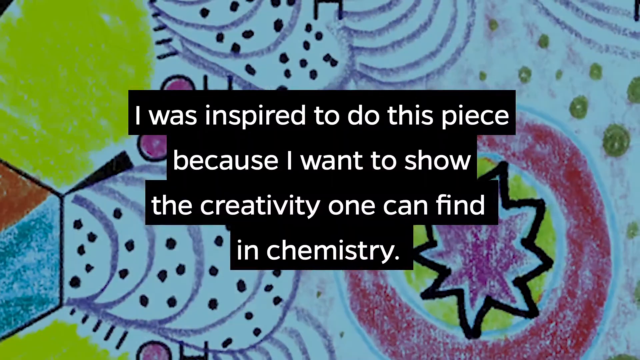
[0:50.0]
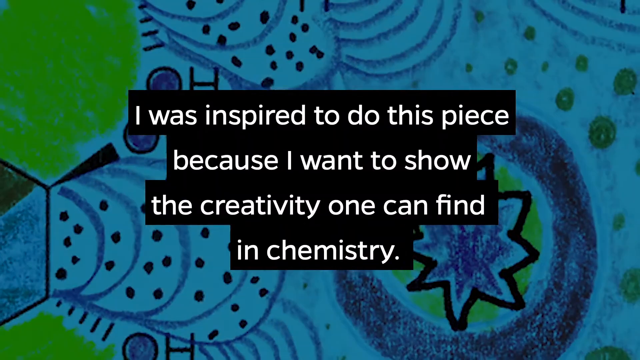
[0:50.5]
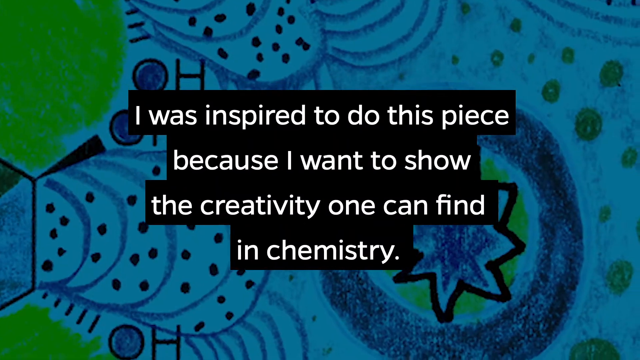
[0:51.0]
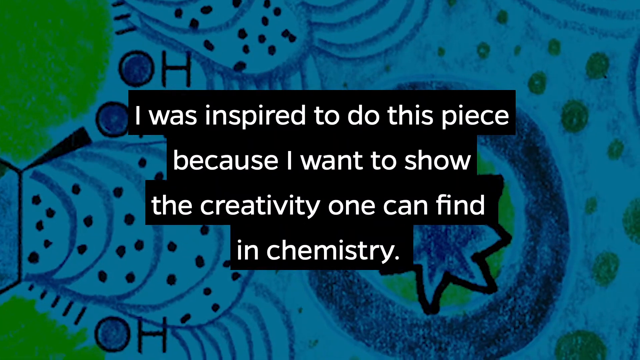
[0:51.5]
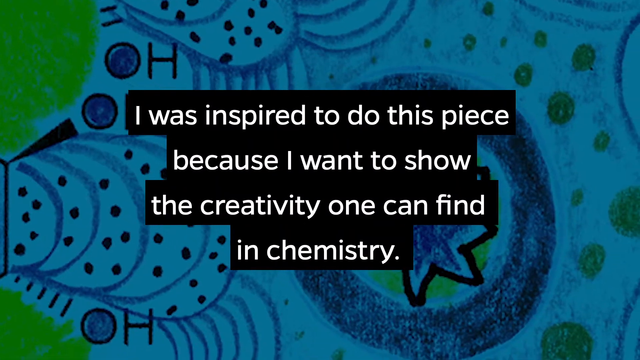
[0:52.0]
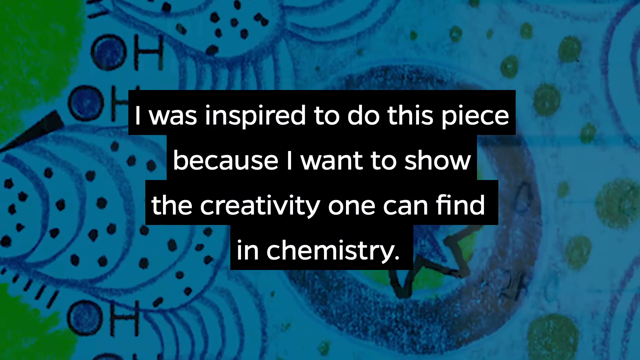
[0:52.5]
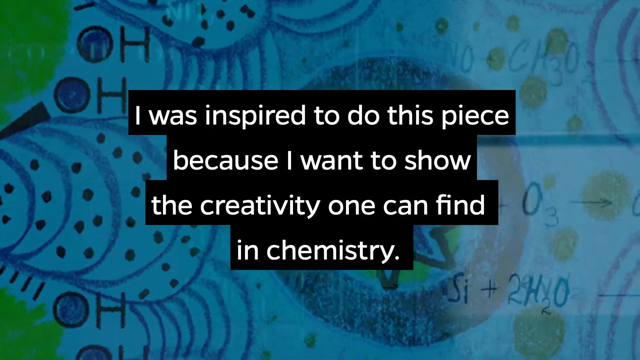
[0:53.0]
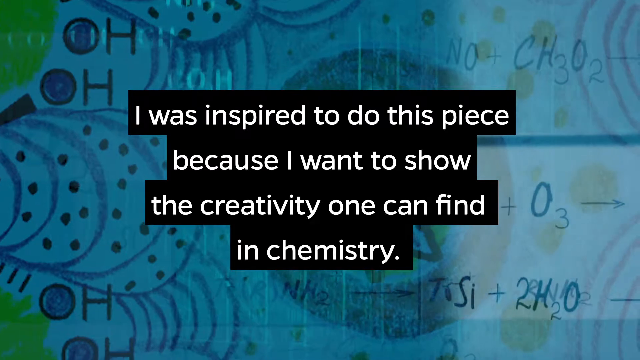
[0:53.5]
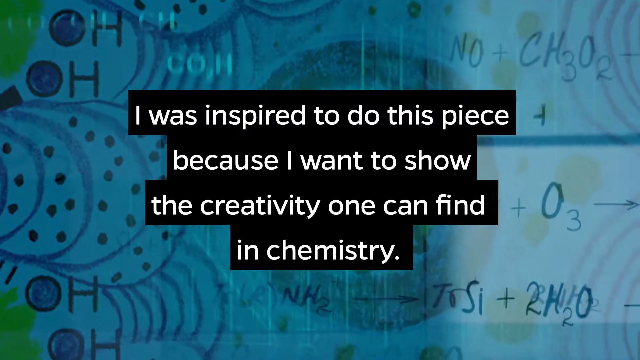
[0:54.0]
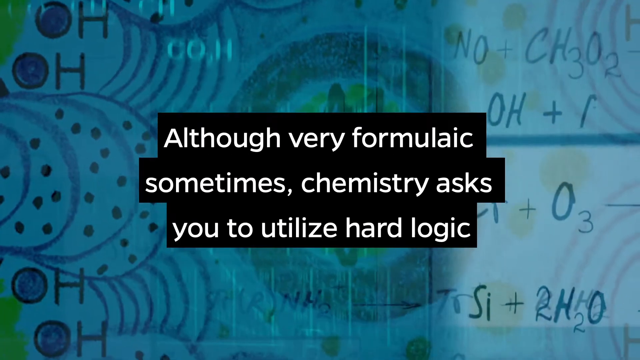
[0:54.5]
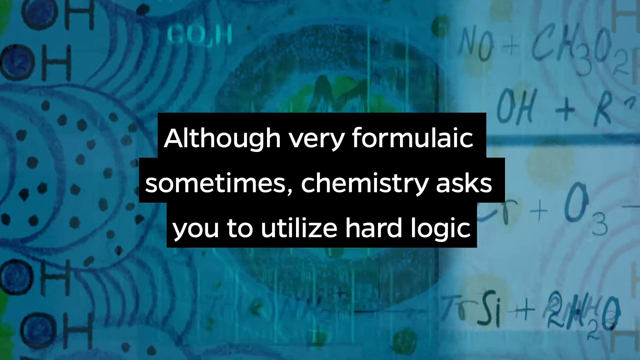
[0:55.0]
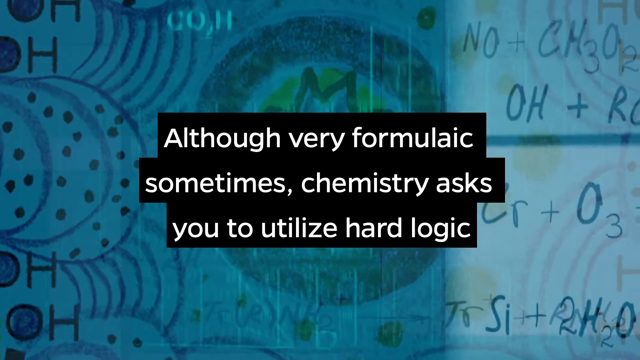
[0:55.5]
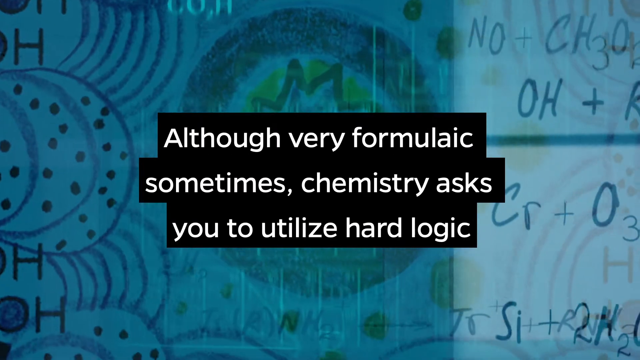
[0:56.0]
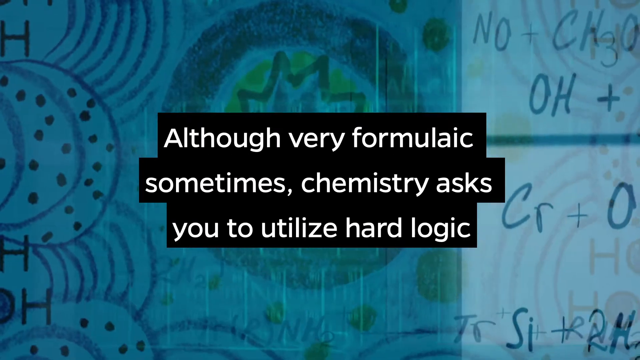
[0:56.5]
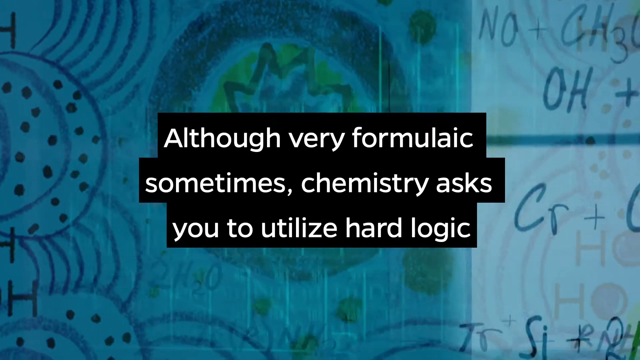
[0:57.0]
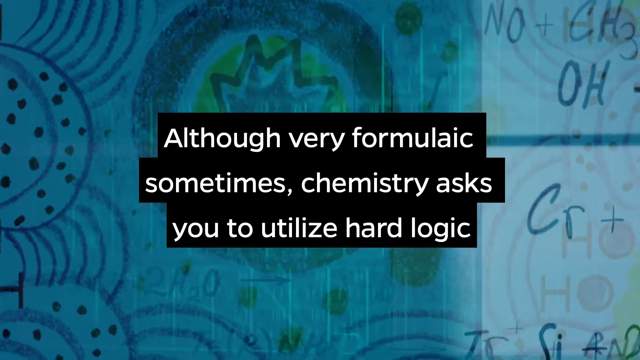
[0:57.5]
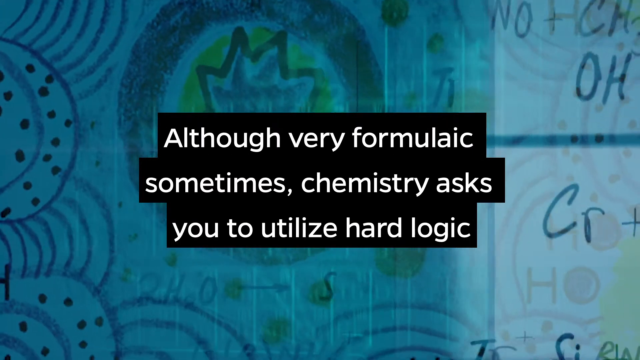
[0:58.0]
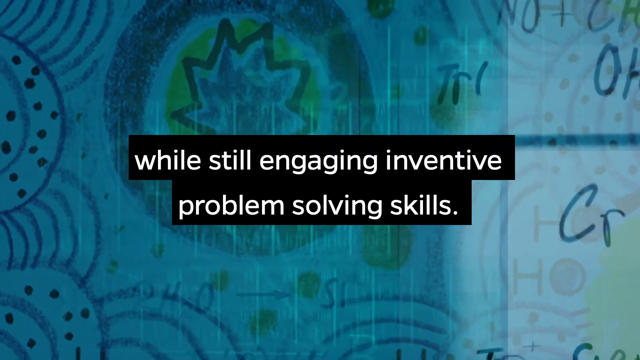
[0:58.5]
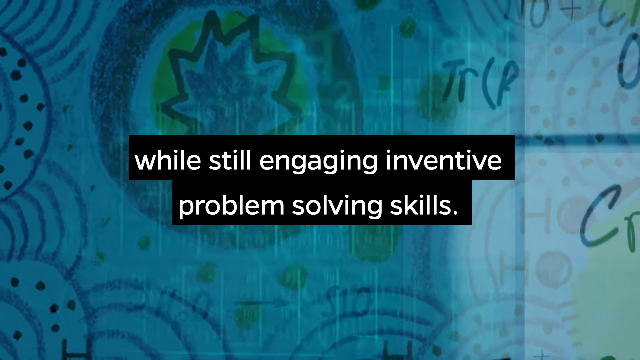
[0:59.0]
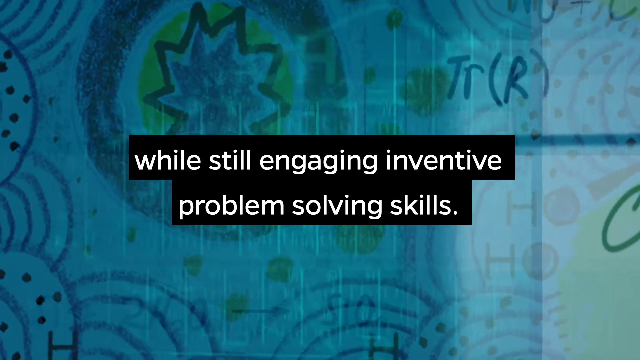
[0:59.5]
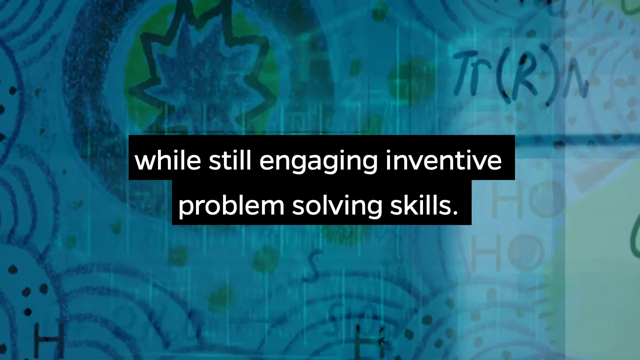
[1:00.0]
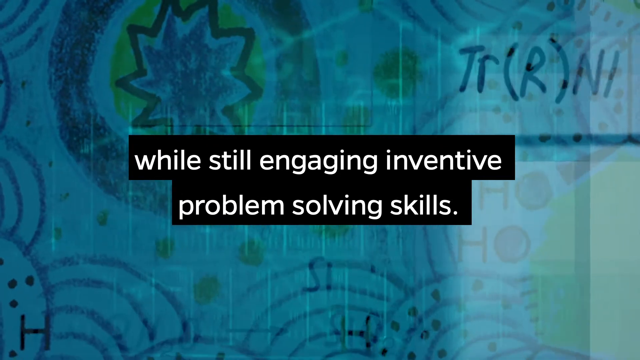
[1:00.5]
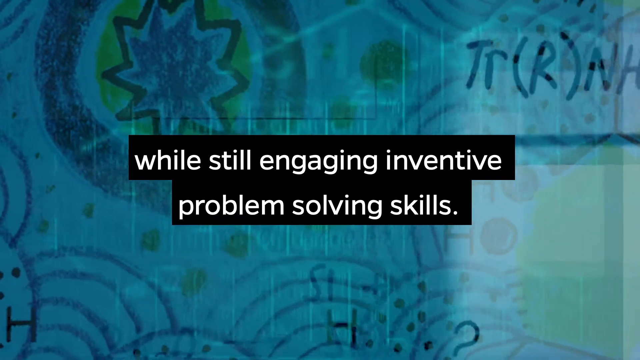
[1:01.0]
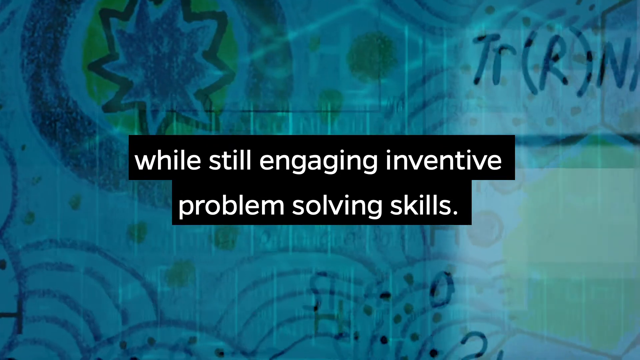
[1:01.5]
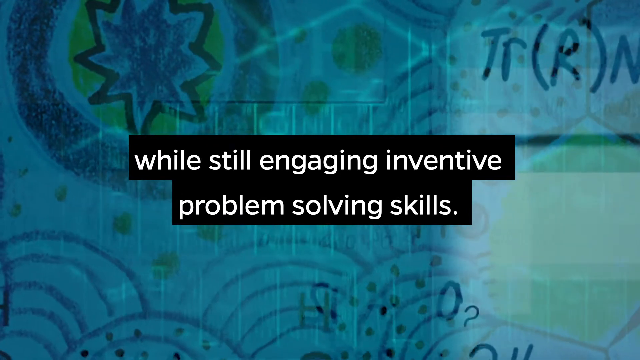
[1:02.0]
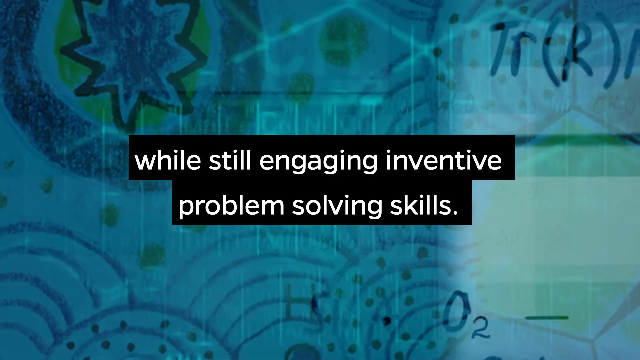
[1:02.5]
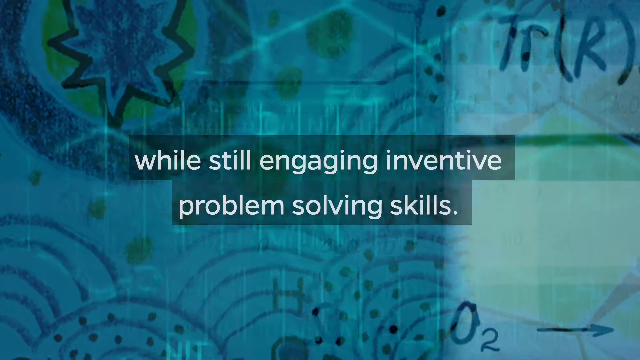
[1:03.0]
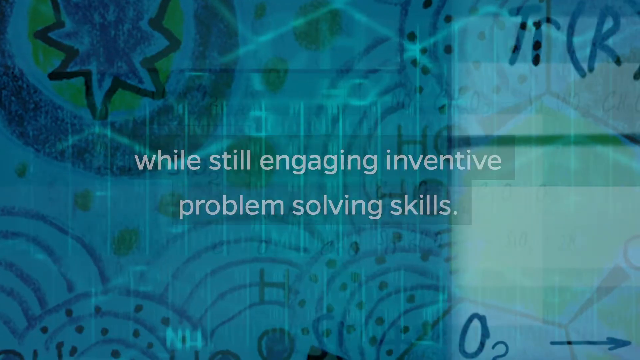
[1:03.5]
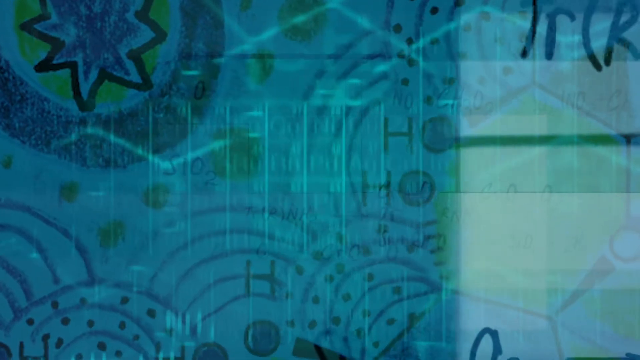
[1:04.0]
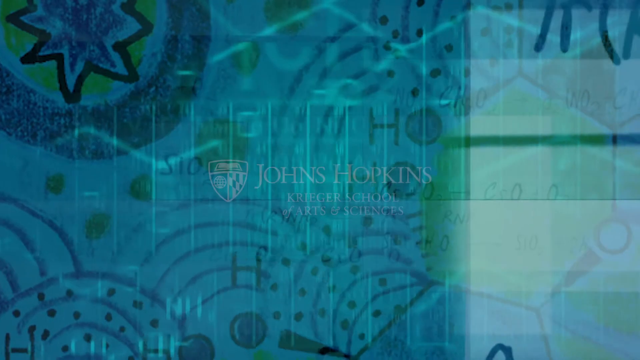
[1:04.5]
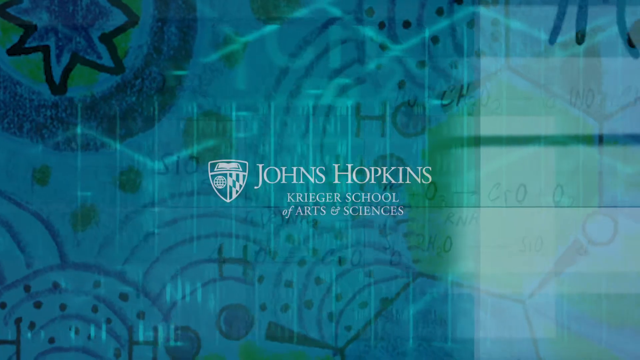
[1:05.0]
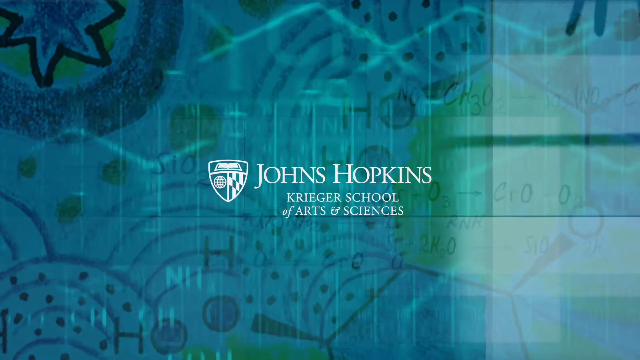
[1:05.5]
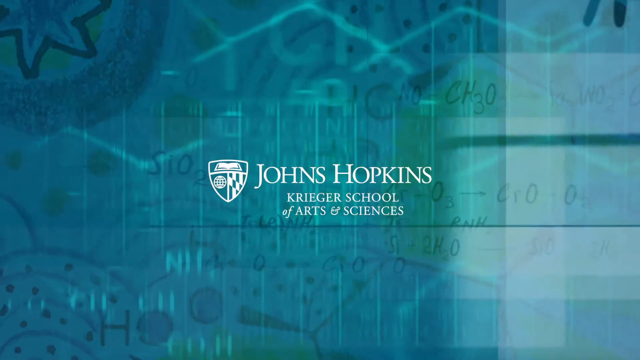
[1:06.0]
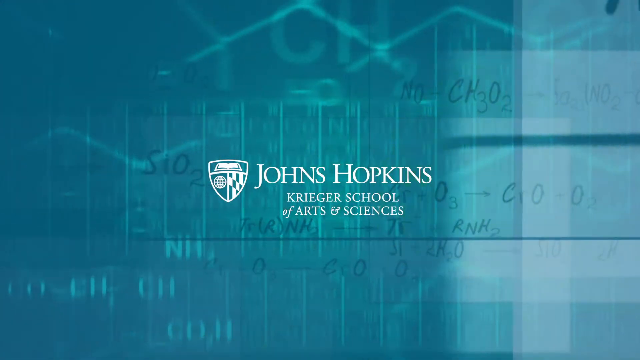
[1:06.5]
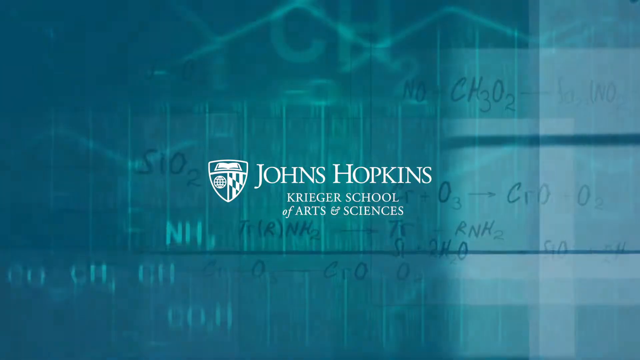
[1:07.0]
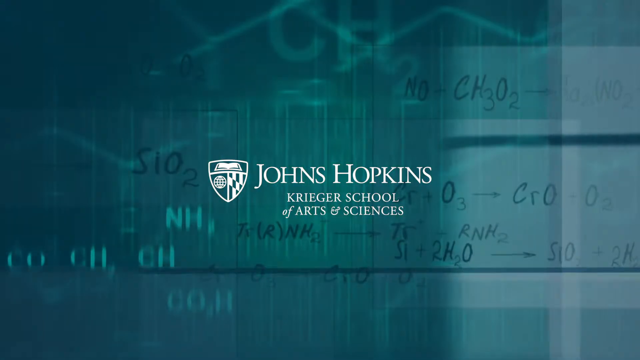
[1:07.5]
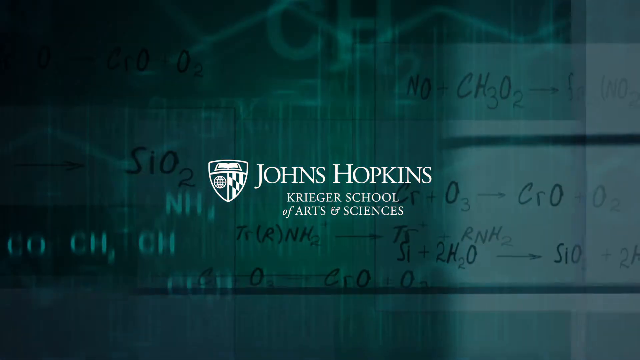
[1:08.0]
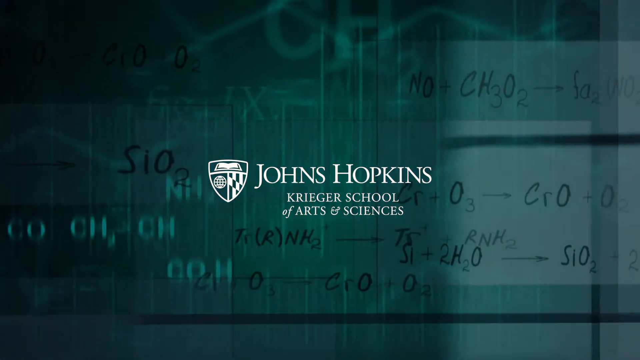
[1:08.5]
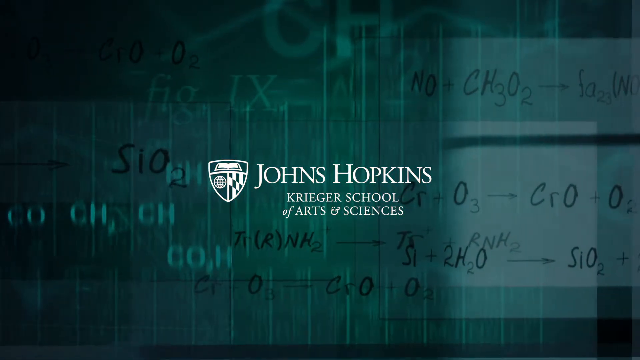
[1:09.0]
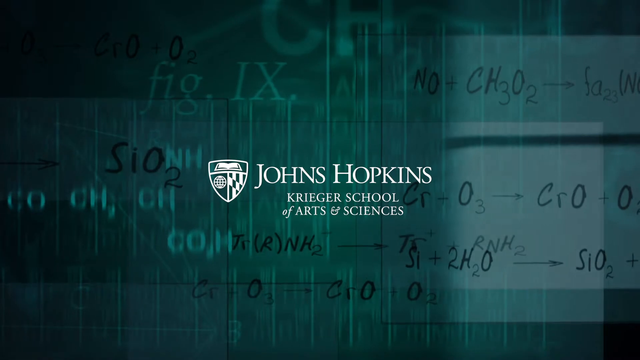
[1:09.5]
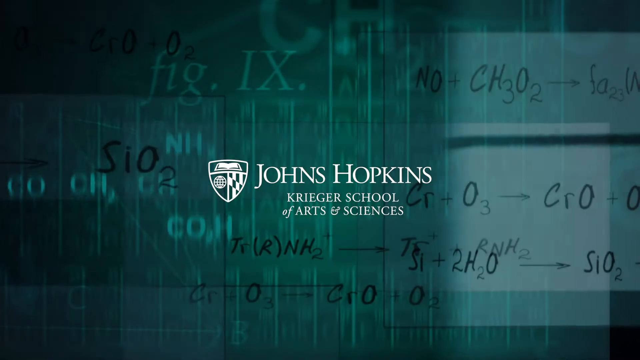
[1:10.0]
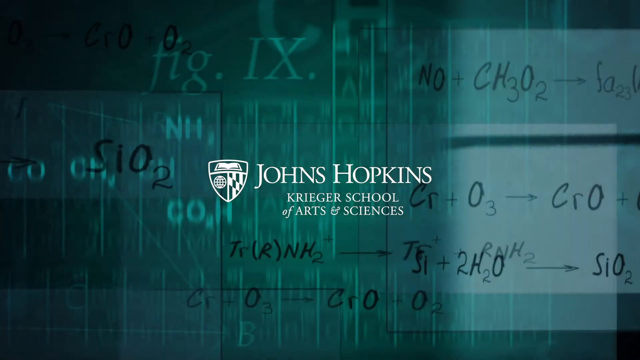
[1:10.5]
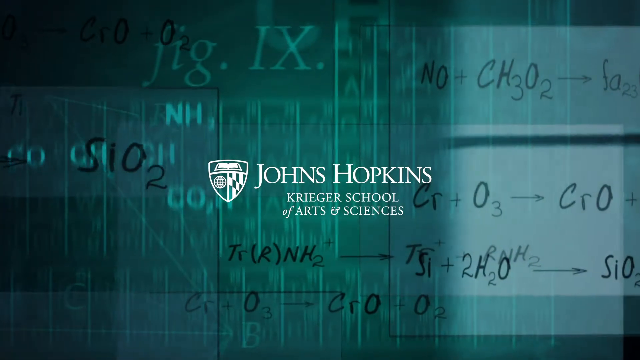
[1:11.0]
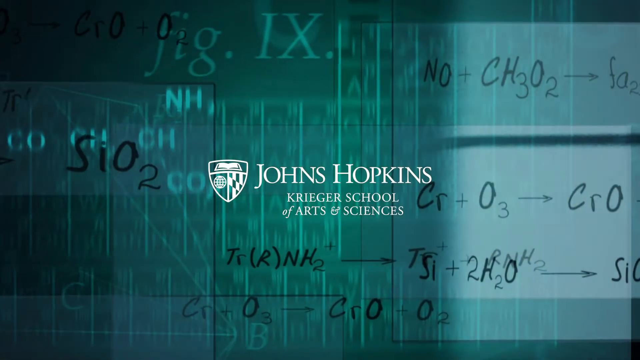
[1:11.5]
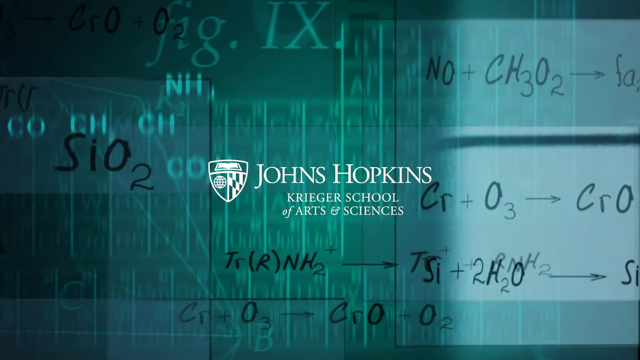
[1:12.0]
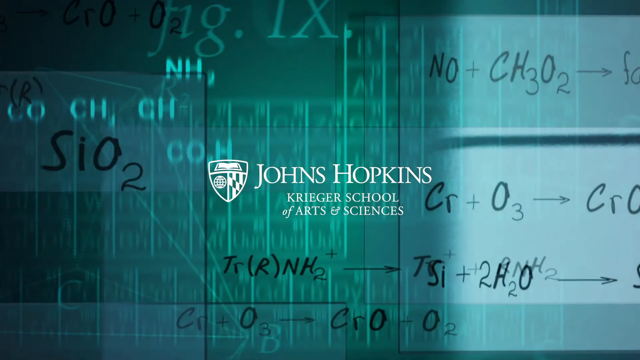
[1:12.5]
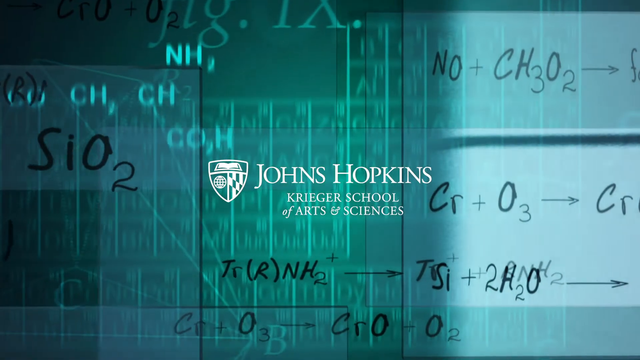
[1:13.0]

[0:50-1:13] The extreme close-up shot of a section of the drawing remains, now static. Large white text in black boxes in the middle of the screen says 'I was inspired to do this piece because I want to show the creativity one can find in chemistry'. The colourful illustration in the backdrop fades to a darker colour and is then replaced by a layered montage of chemical formulas moving in various directions, as the text in the black box in the centre changes to 'Although very formulaic sometimes, chemistry asks you to utilise hard logic while still engaging inventive problem-solving skills.' The black boxes with white text disappear, leaving the darkened close-up shot of the drawing as many different chemical formula images continue to mix, and the white Johns Hopkins Krieger School of Arts and Sciences logo appears in the middle of the screen.